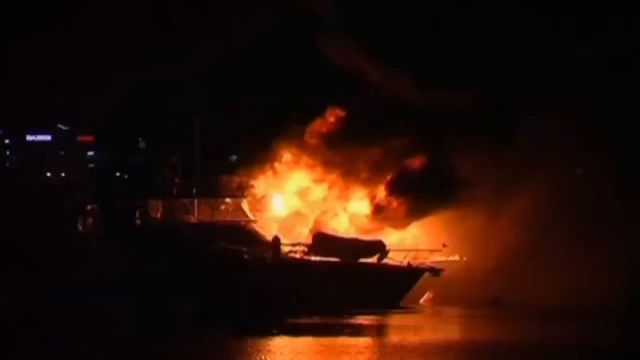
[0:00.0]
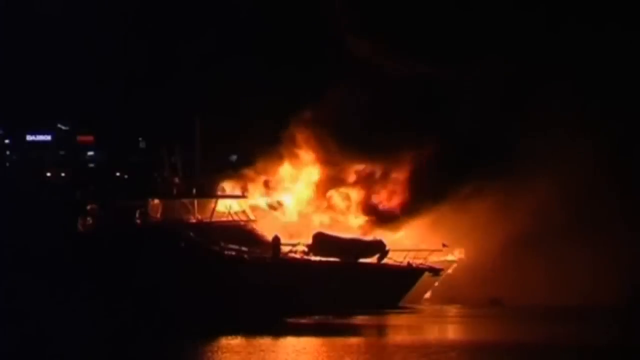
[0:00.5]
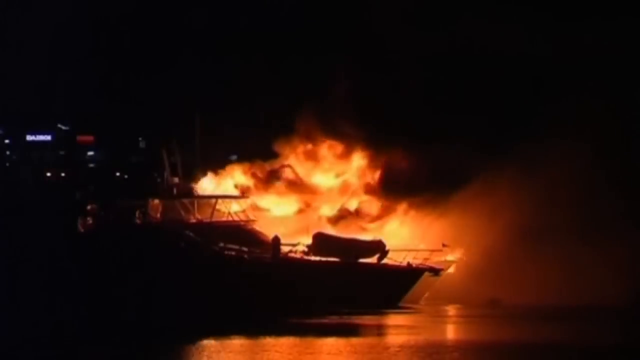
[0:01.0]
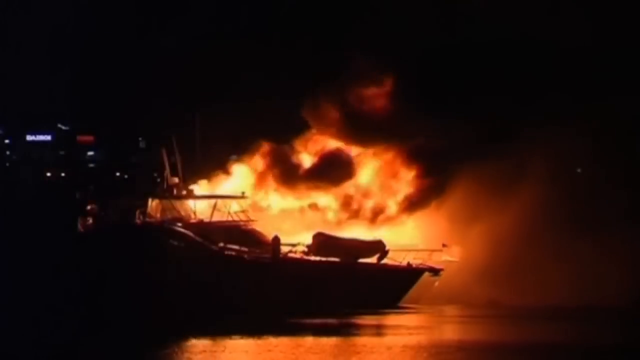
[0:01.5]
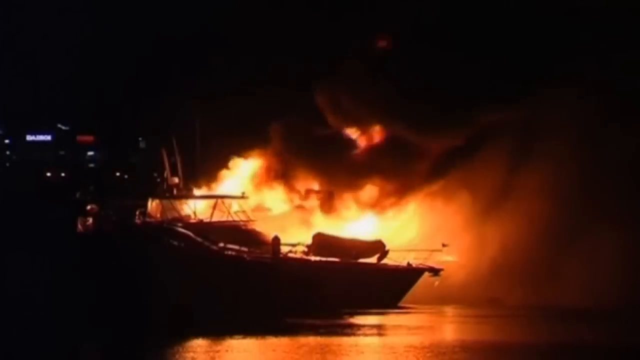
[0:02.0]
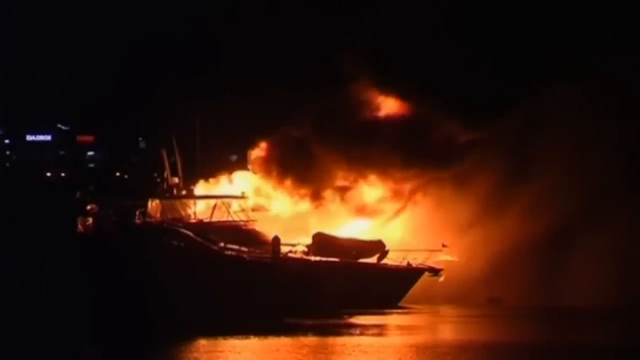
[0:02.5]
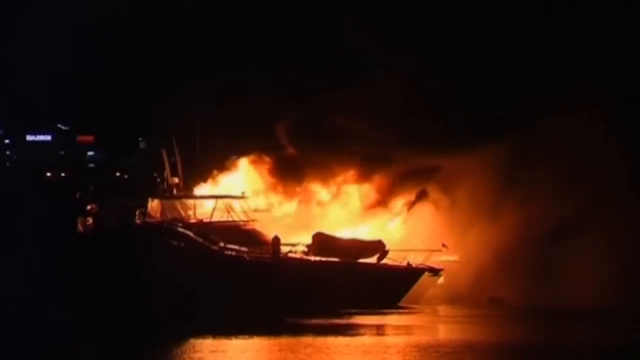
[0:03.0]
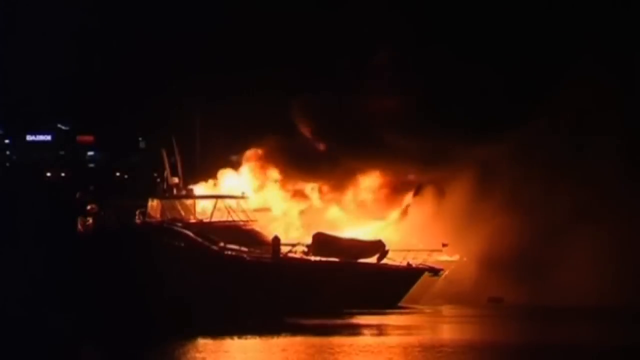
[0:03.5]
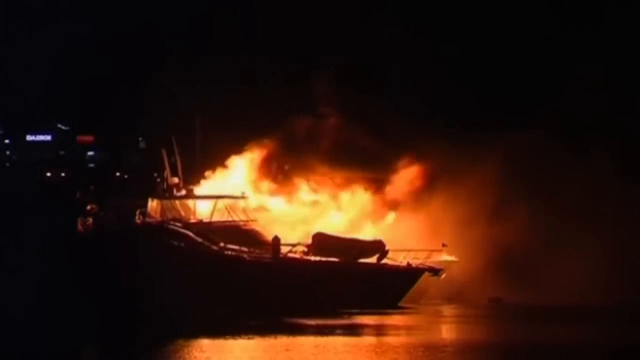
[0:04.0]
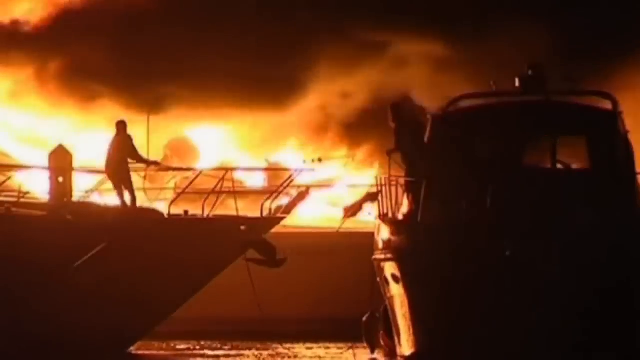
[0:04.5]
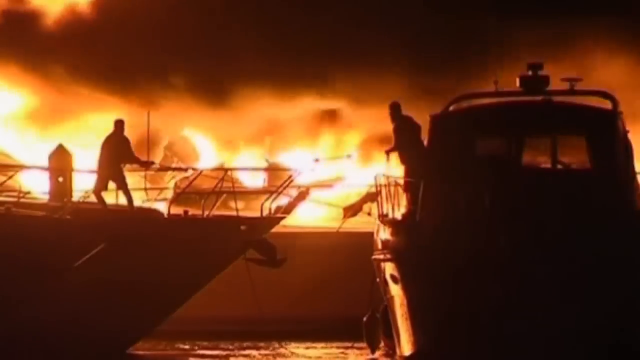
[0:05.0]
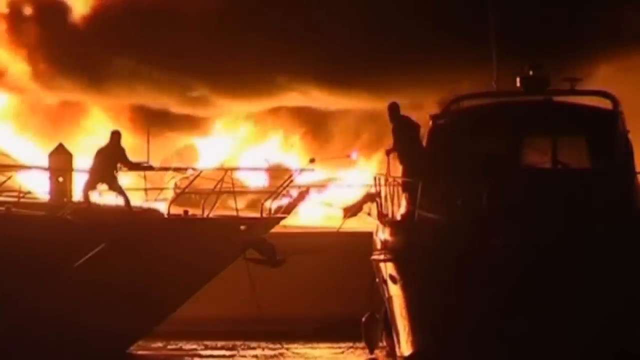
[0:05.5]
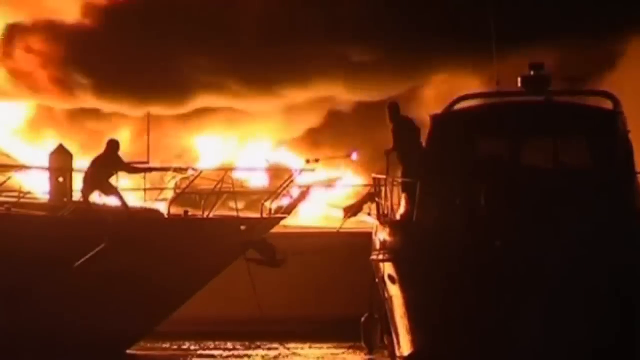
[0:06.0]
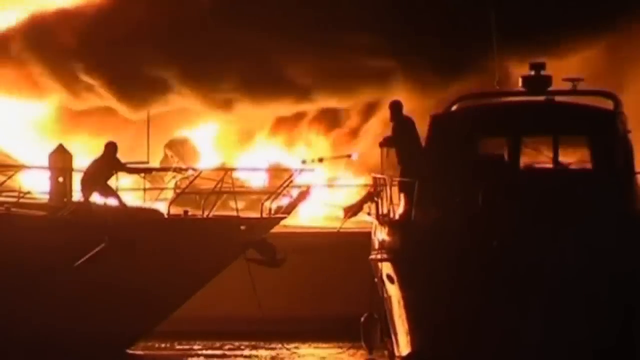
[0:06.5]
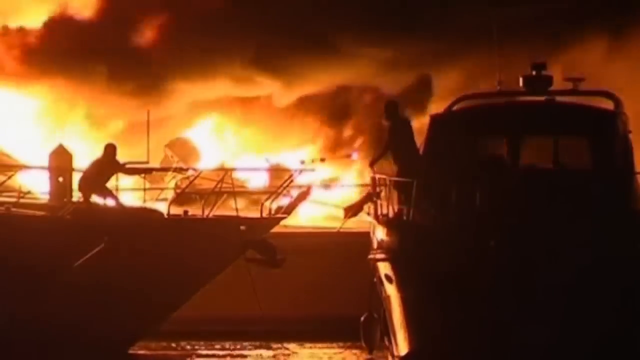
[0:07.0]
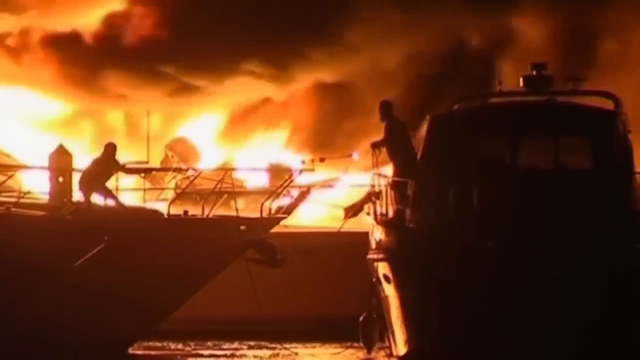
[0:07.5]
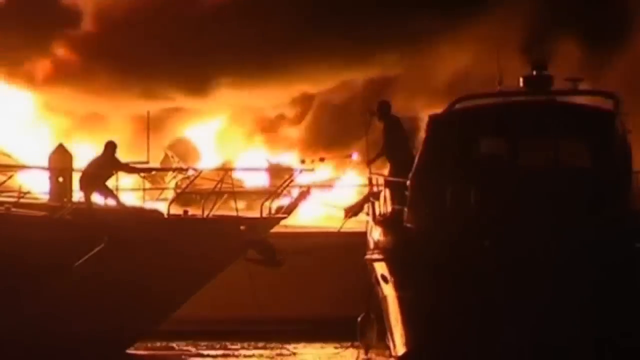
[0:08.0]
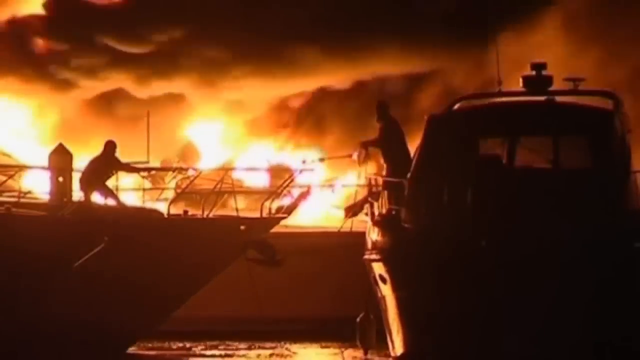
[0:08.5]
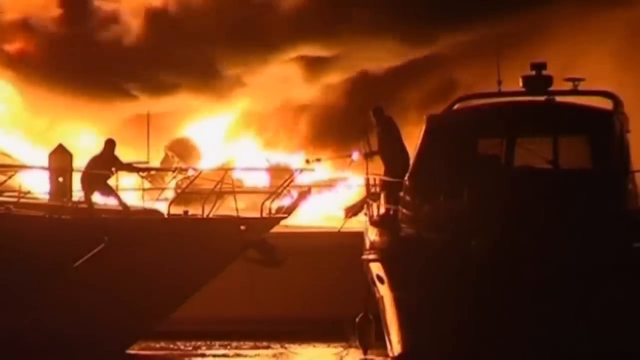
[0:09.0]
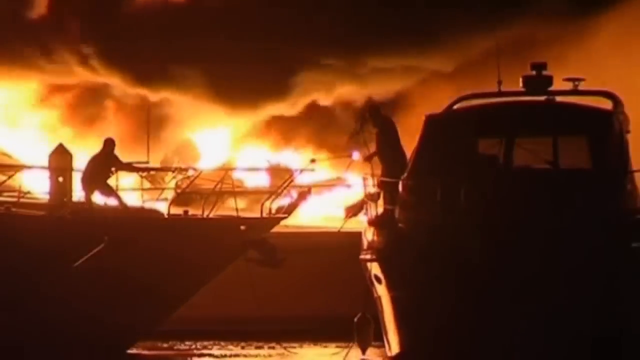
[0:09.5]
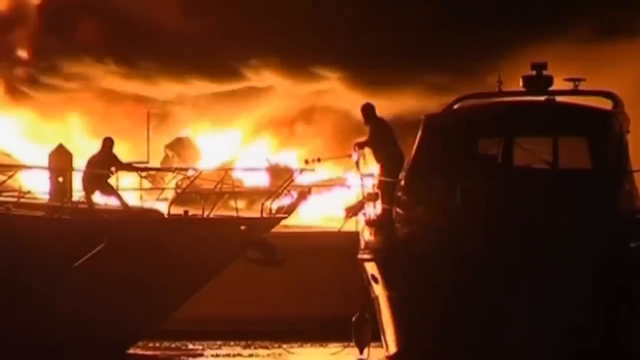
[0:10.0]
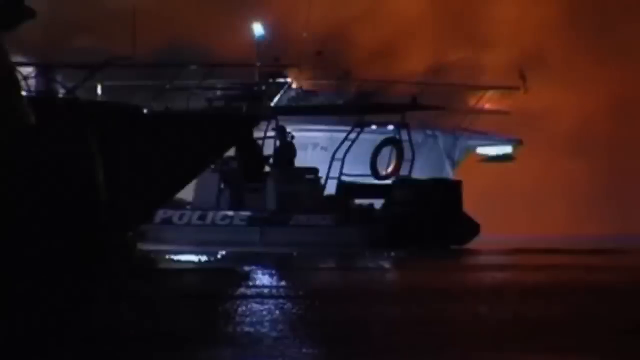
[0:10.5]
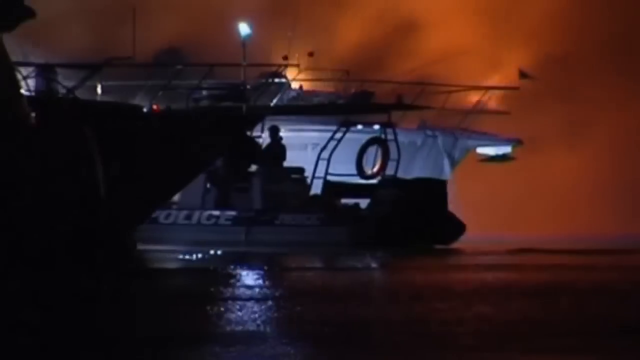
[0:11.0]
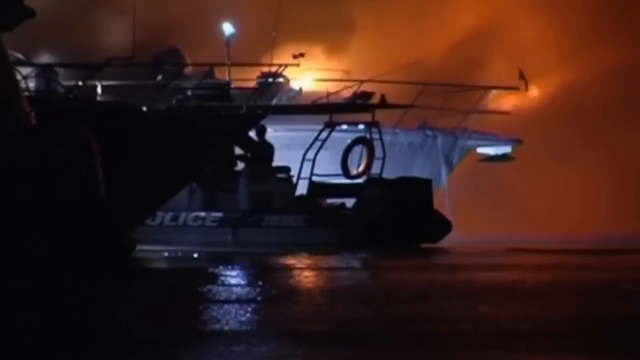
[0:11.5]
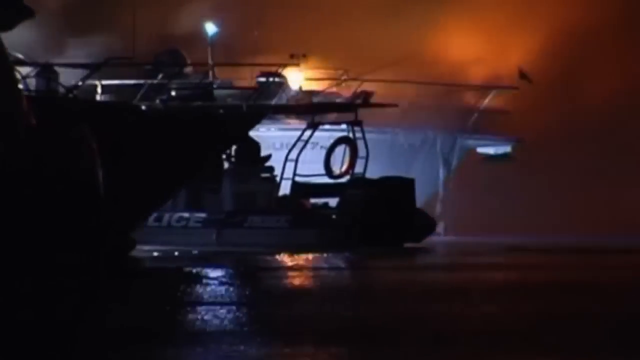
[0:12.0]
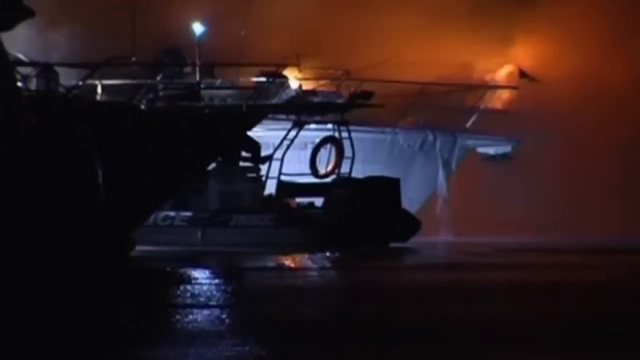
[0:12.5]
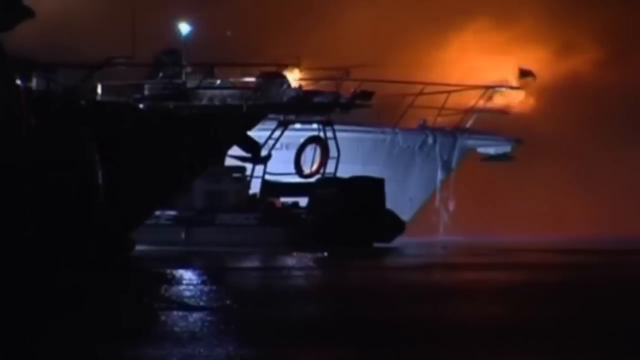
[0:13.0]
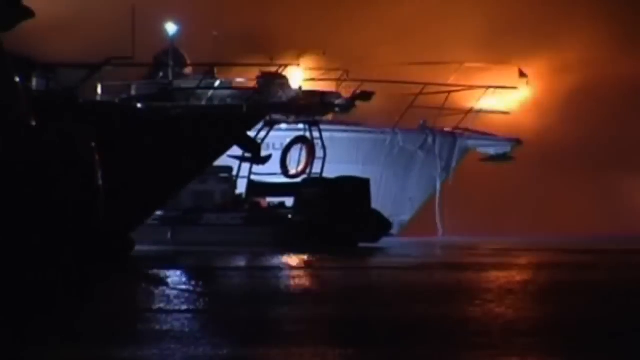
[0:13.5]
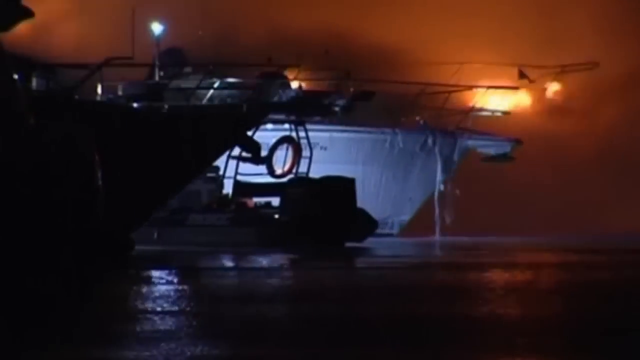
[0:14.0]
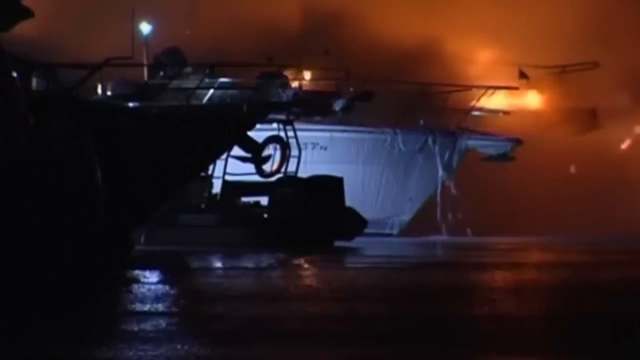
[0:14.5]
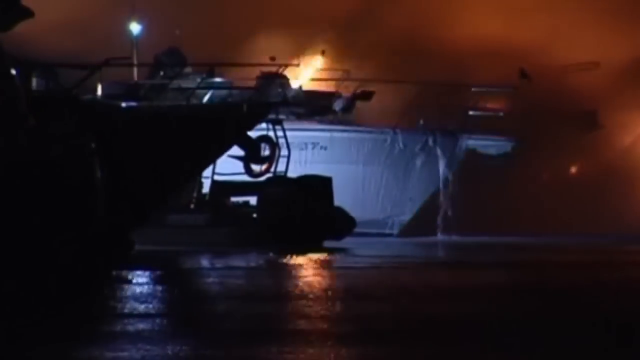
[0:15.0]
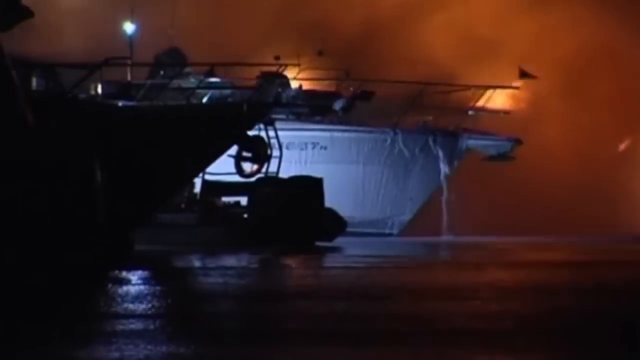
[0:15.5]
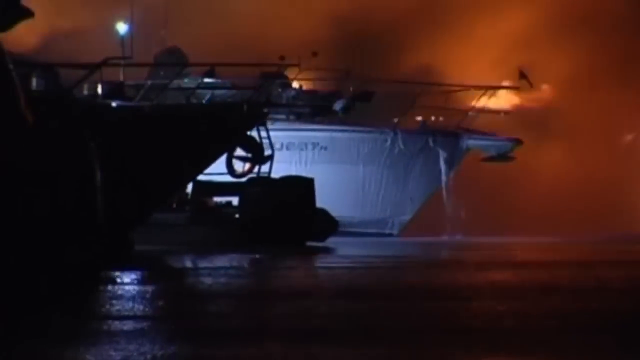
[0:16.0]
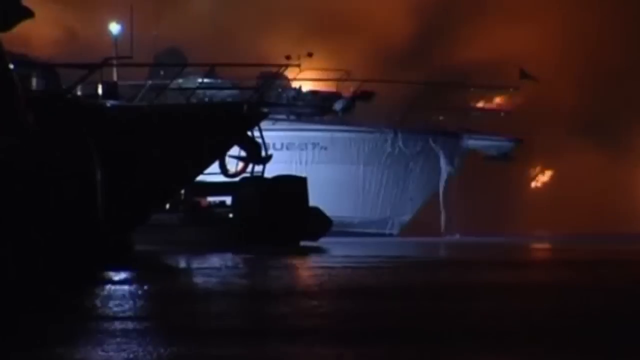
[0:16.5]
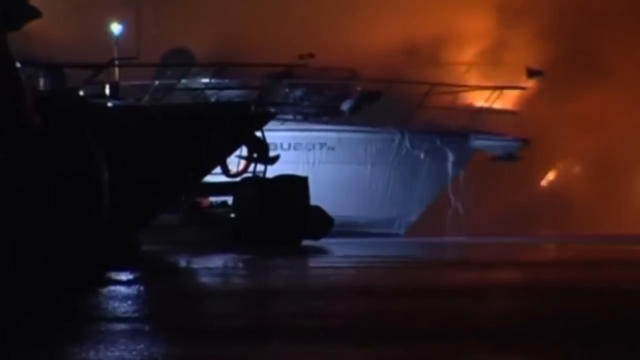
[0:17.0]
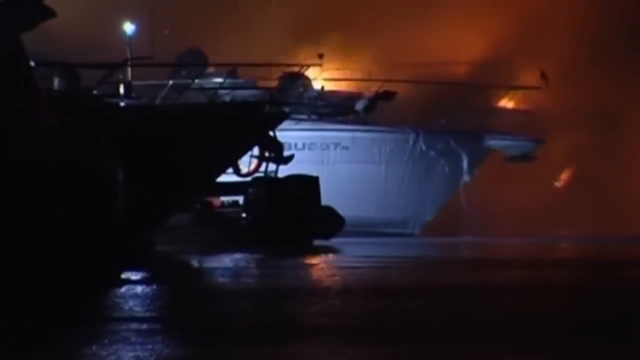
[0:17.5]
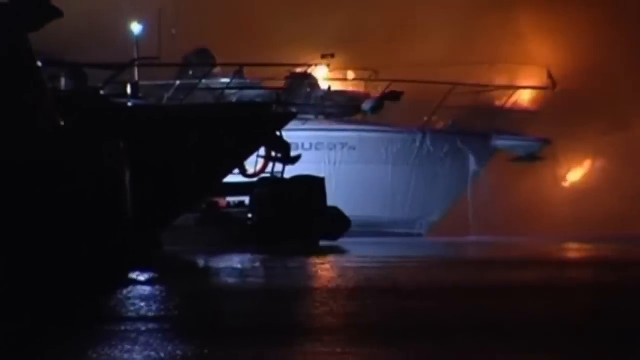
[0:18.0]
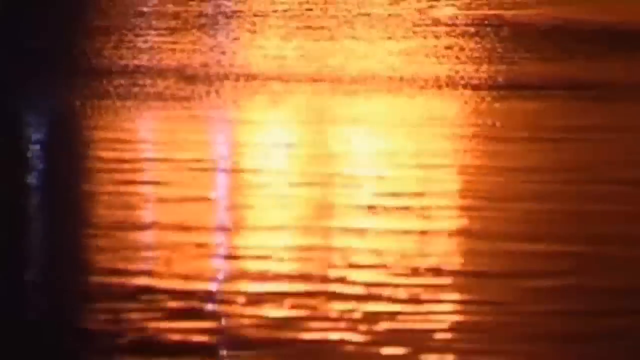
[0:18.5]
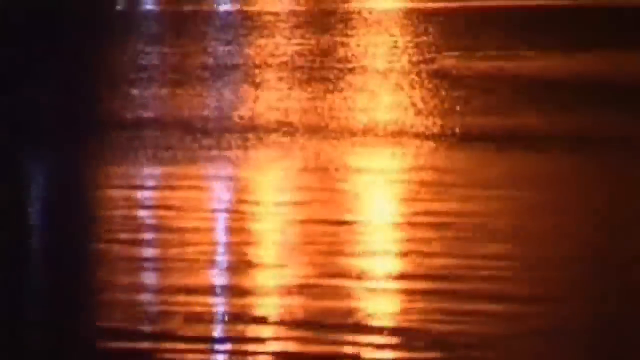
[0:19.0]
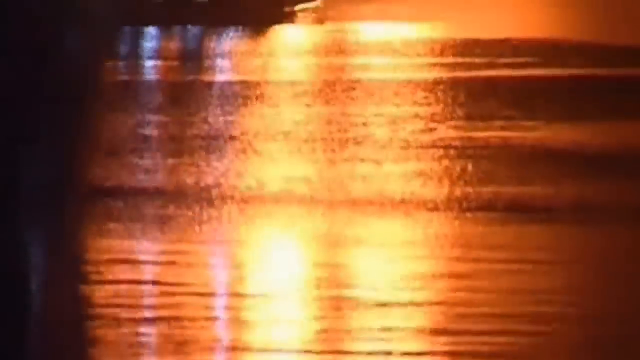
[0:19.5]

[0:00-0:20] A boat in the background is engulfed in a large amount of fire, in what looks like an explosion, and smoke rises from it. Two boats are in the foreground with a person on each, and they seem to be looking at the fire that appears to be happening to another boat behind them. A cloud of smoke passes toward the right side of the screen. Another boat with "police" written on it in white text appears and seems to be going between two boats, while the boat in the background is still on fire. The scene then cuts to the water, where fire reflects off the surface. The camera pans up, and smoke, which looks kind of orange and gray, appears at the top of the screen.